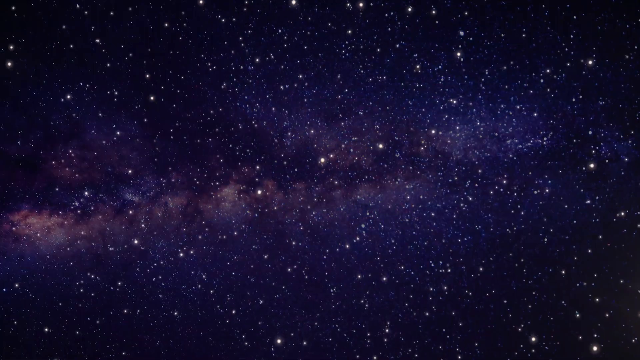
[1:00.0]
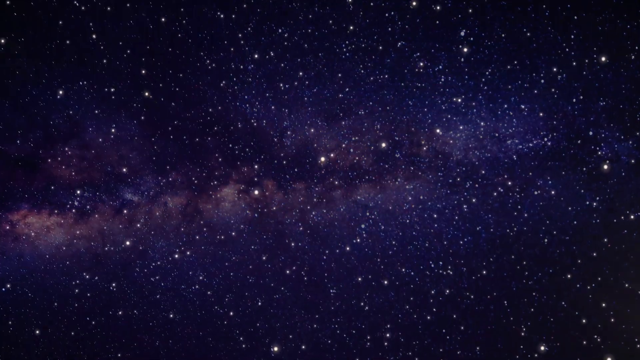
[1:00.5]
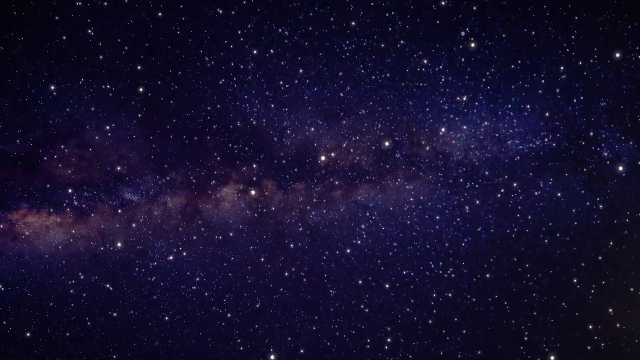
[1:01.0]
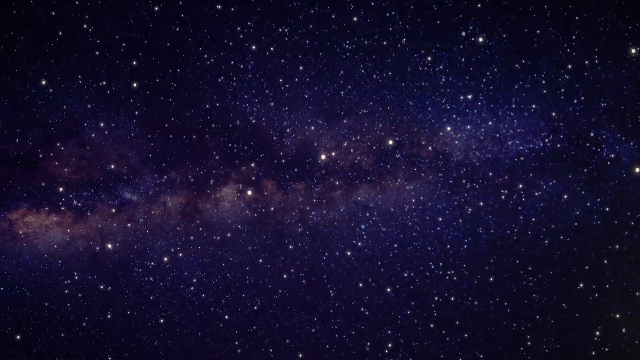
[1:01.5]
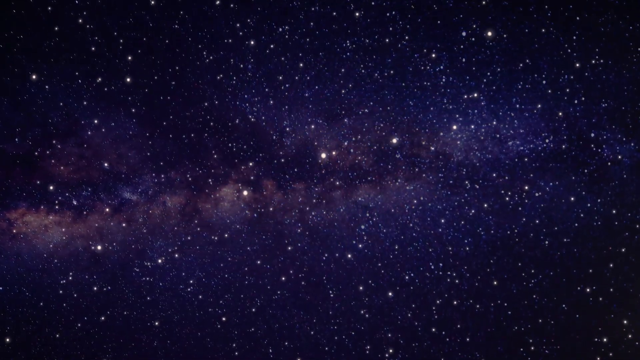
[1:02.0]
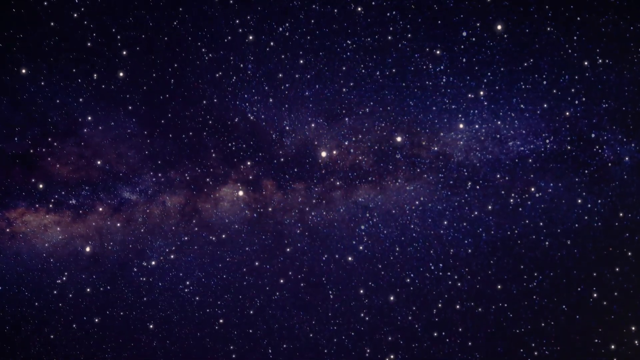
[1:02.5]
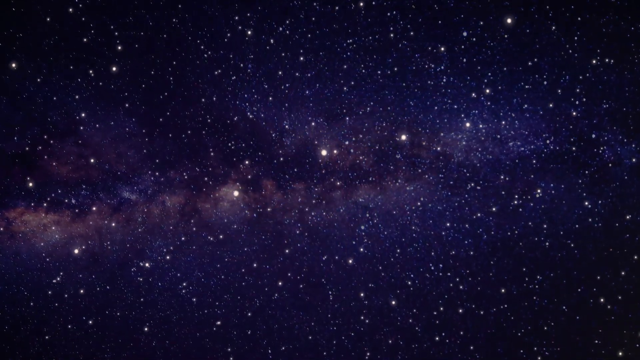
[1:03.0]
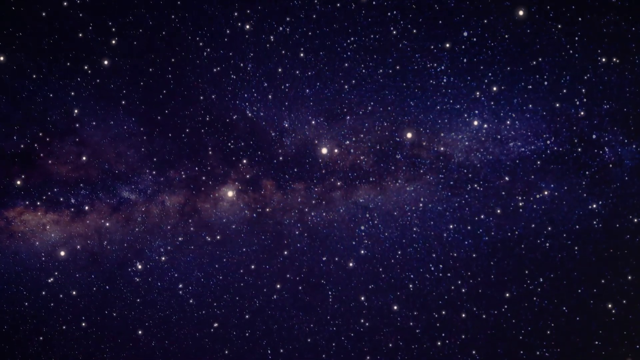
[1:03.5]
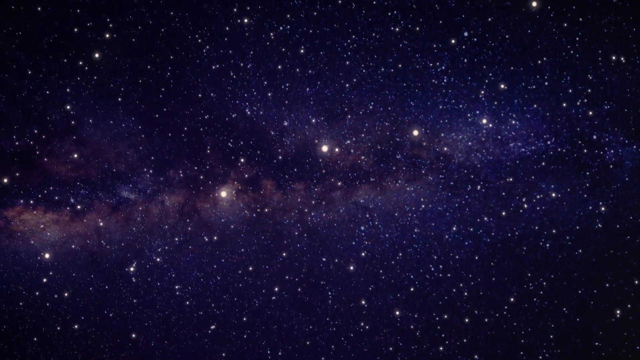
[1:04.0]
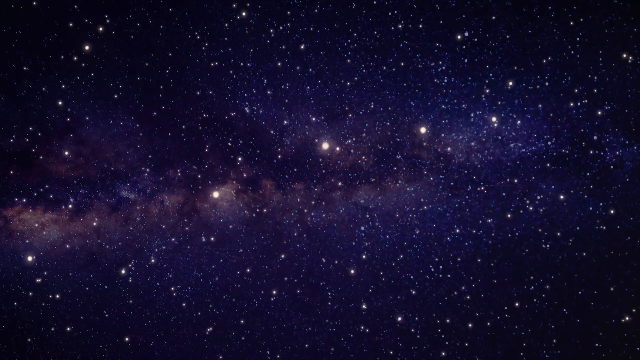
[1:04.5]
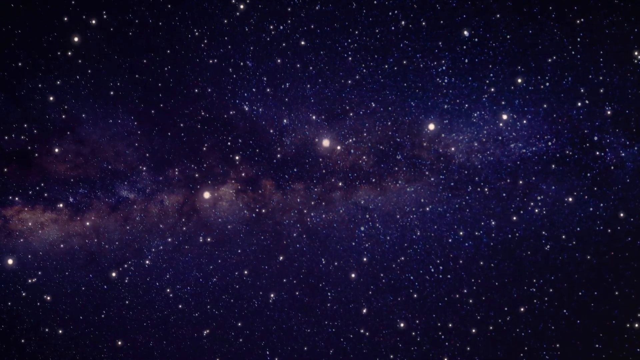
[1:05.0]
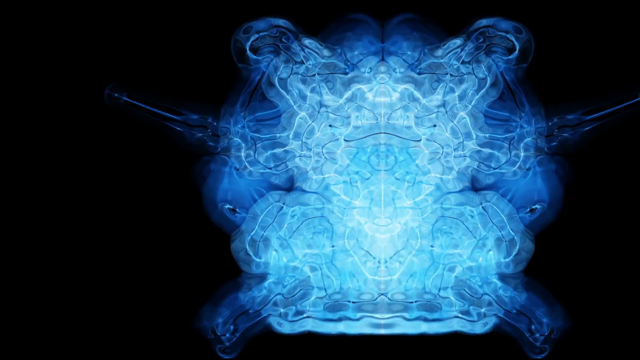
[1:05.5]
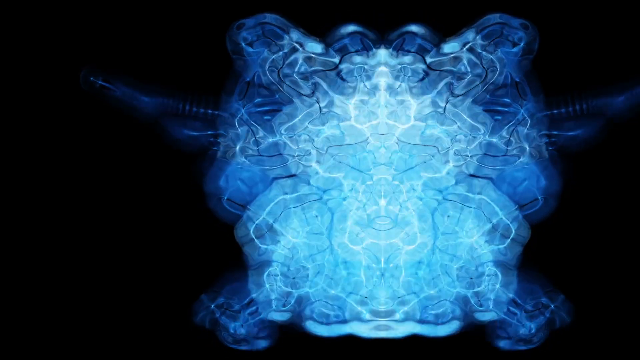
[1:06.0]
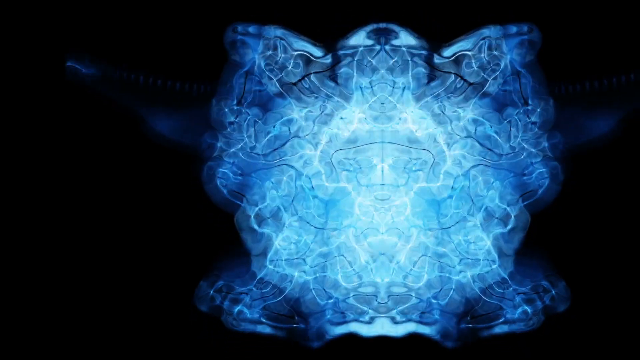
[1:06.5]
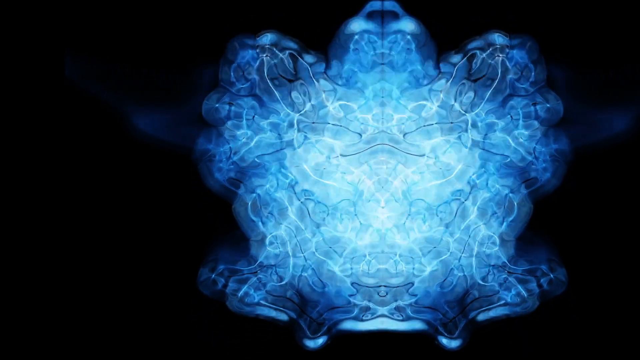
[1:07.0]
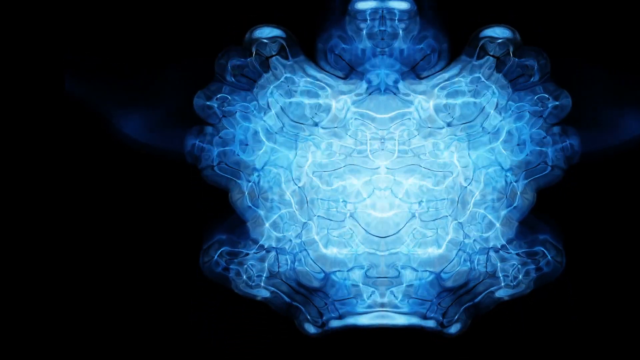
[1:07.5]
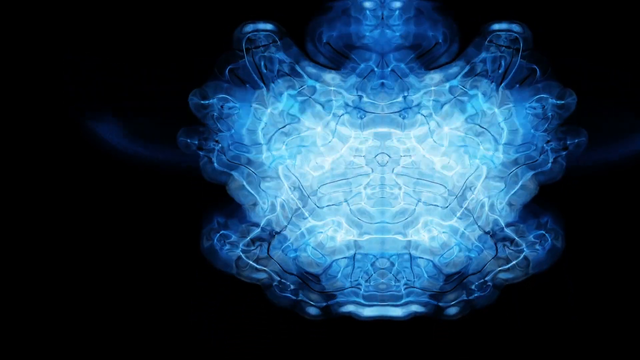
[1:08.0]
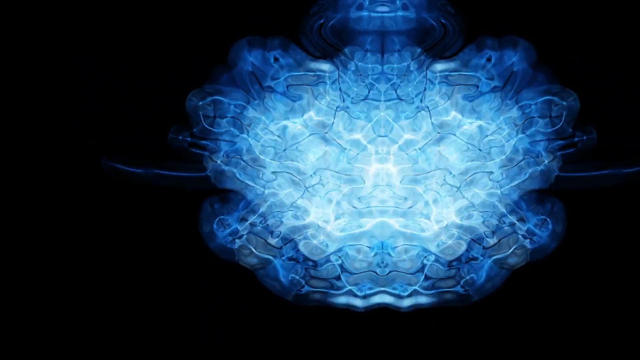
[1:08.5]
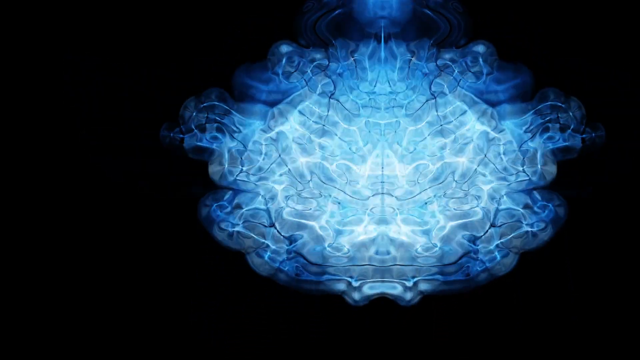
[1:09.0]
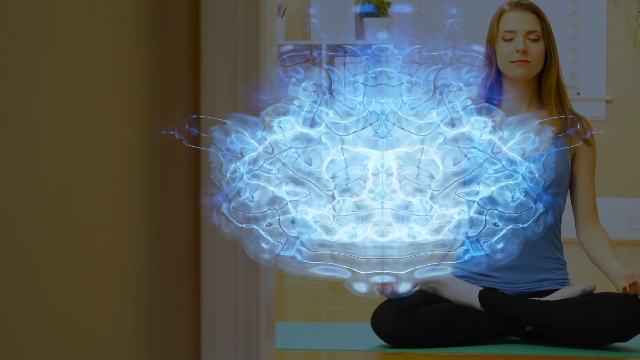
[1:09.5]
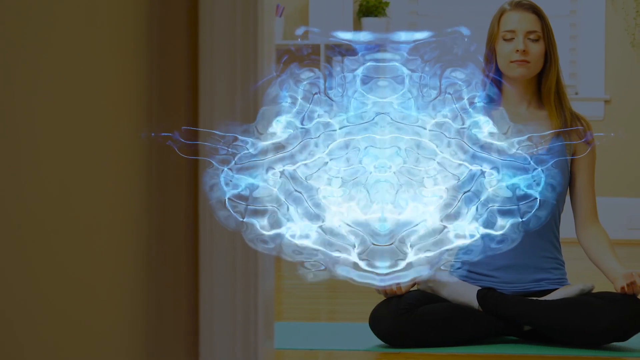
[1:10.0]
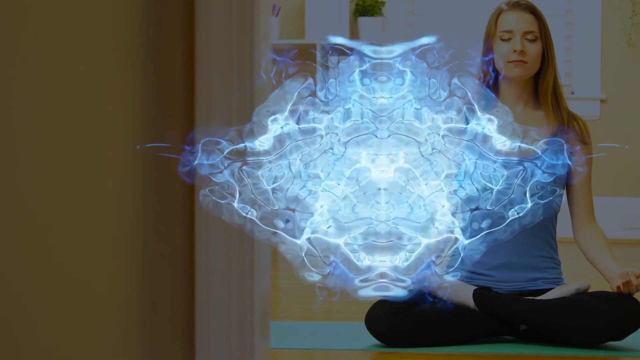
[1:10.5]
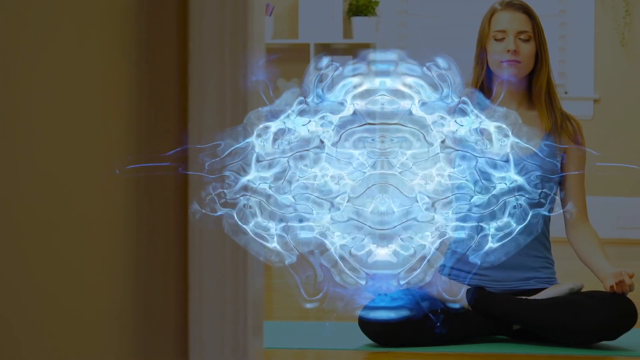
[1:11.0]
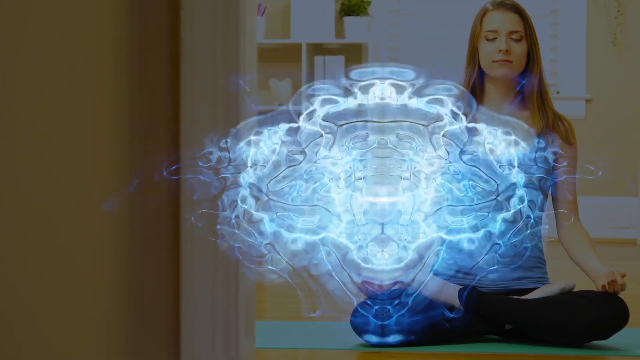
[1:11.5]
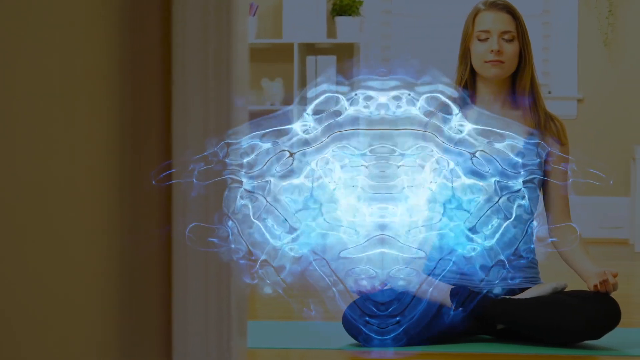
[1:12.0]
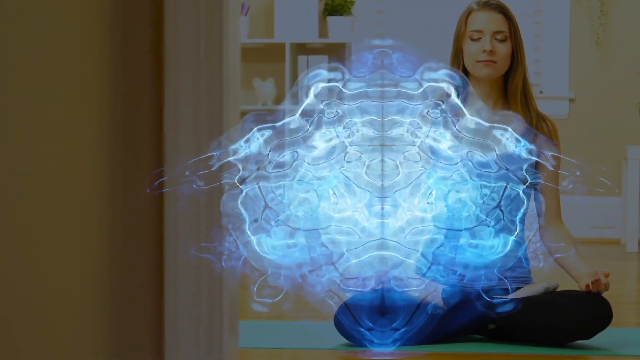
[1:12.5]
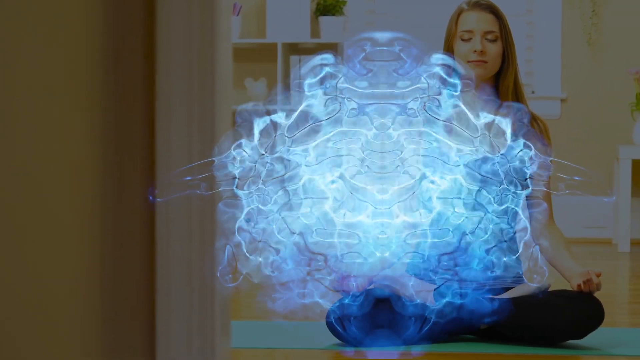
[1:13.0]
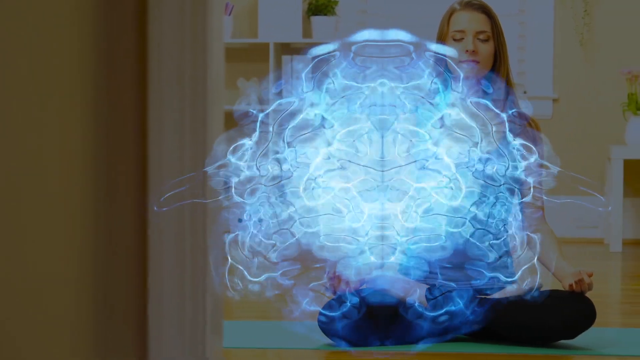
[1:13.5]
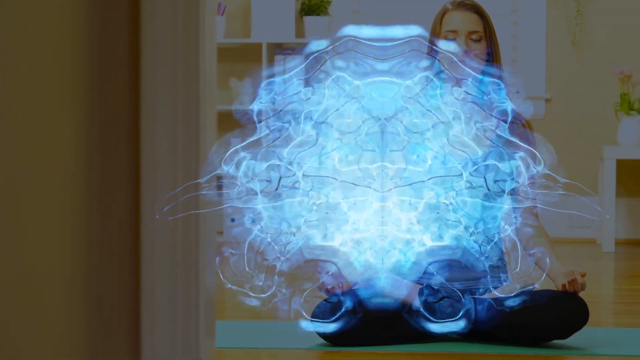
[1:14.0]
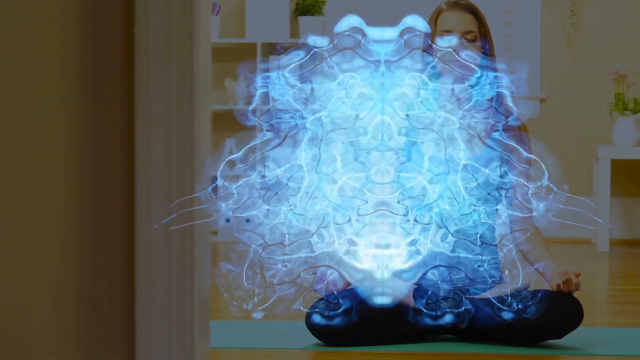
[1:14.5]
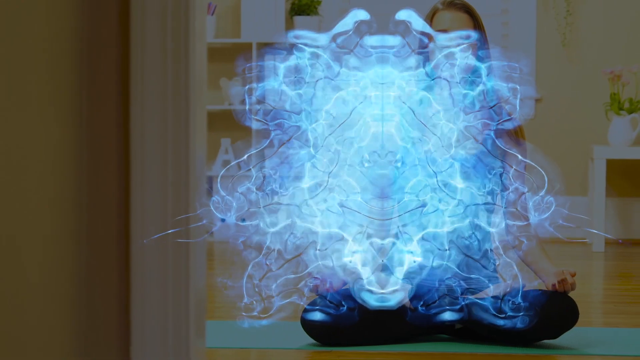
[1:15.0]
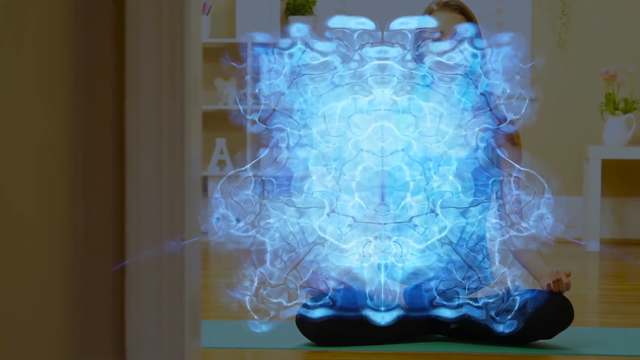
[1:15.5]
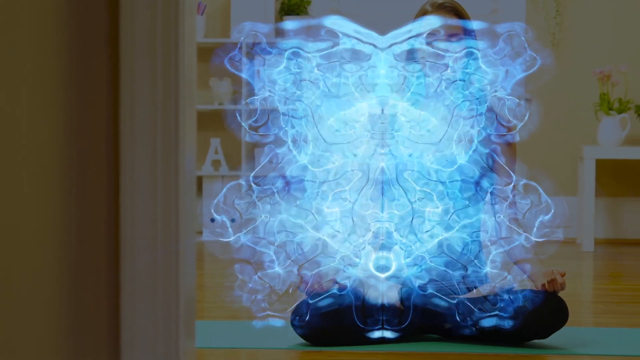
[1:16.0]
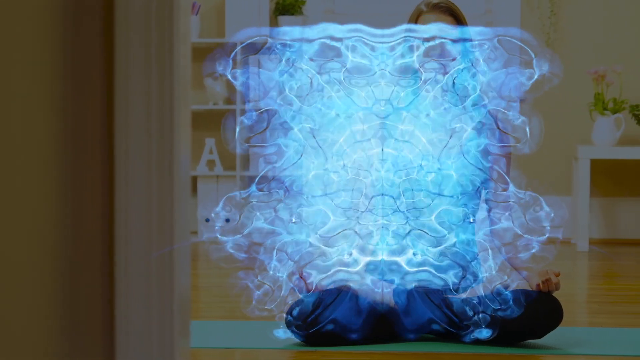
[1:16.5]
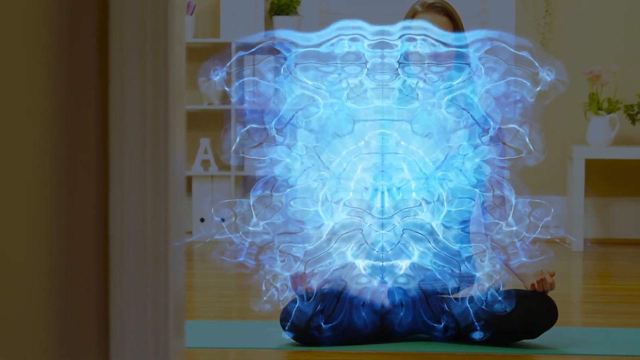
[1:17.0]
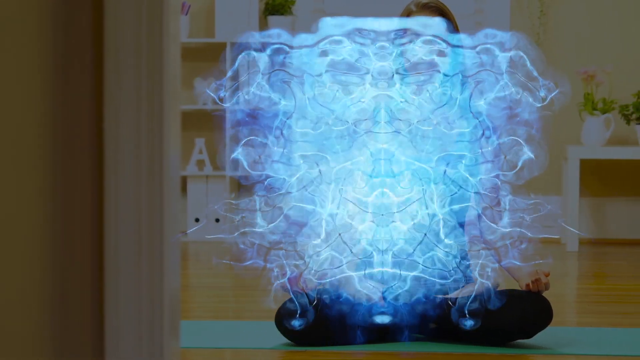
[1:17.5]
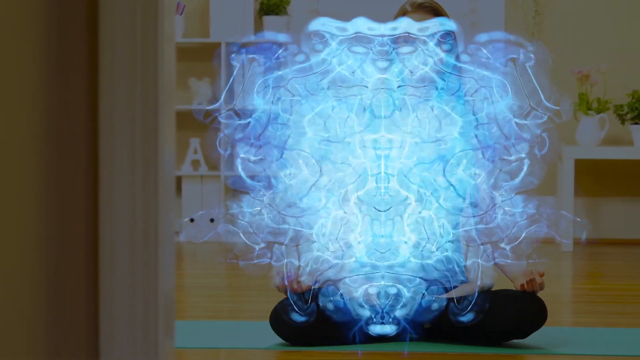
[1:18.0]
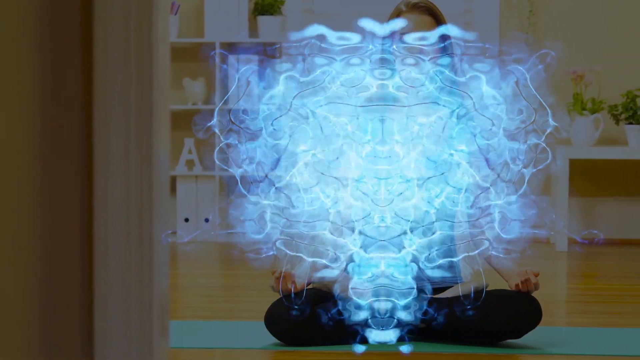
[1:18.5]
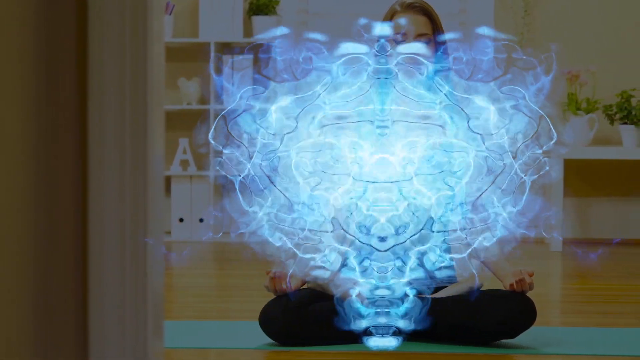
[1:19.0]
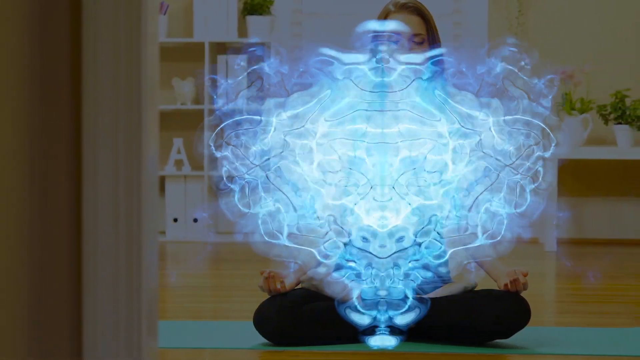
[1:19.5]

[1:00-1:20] A starry galaxy image shows hundreds and hundreds of stars, some tiny and some bigger, moving closer towards the camera, with tiny hints of purple, blue and white. As the stars come closer, a few of them get bigger. The screen then goes dark, and in the middle there is something blue and white that looks like a vortex, moving constantly. An image appears of a white woman with long hair sitting with her legs folded and her arms rested on her knees, her eyes closed; she looks as if she is meditating. As her image moves towards the left, the vortex is still moving in the center of the screen. Behind the woman there appear to be cupboards, and there is a table with some plants on it.